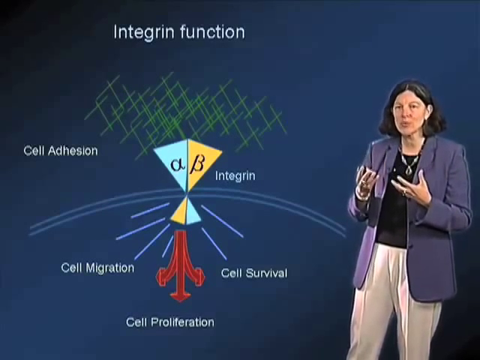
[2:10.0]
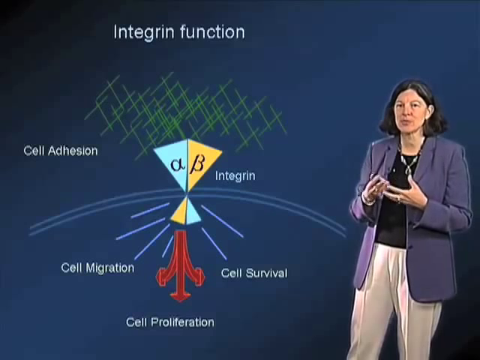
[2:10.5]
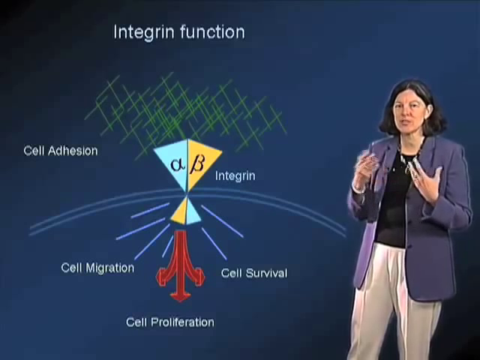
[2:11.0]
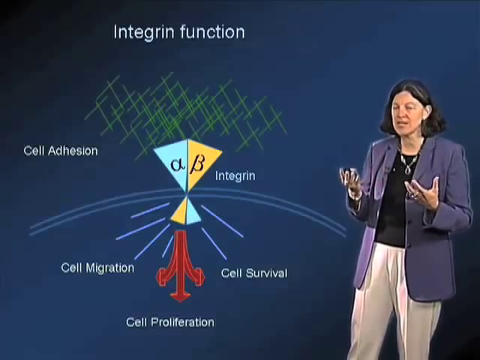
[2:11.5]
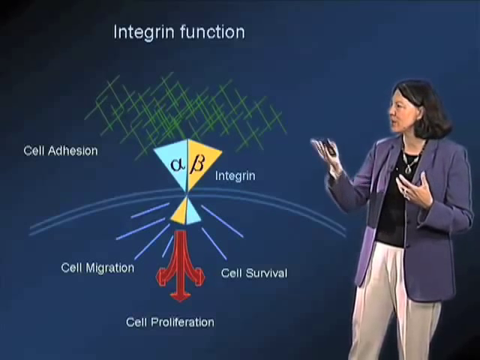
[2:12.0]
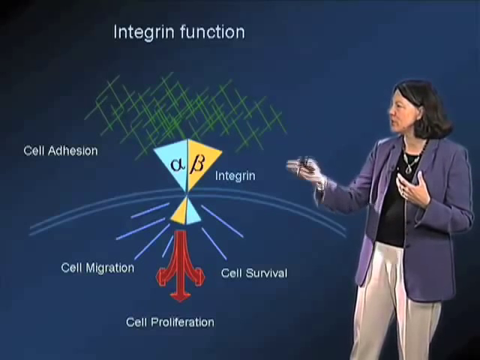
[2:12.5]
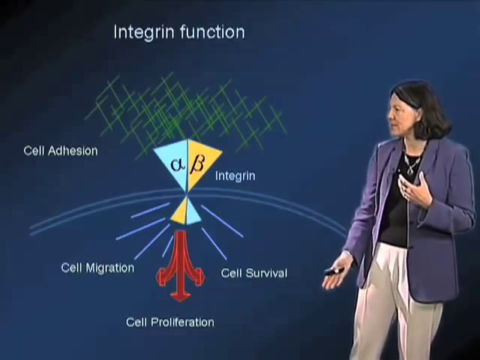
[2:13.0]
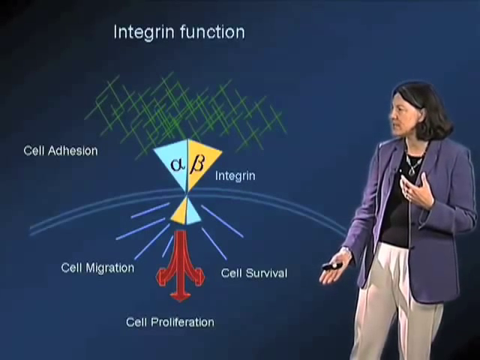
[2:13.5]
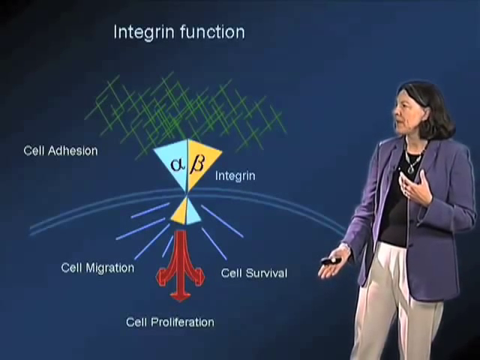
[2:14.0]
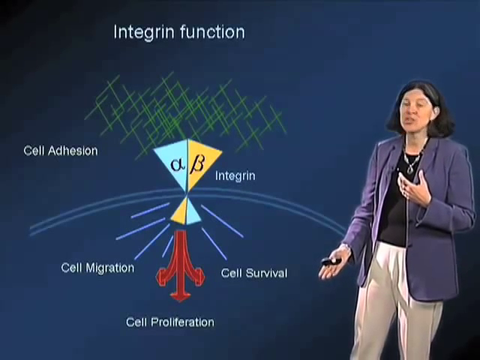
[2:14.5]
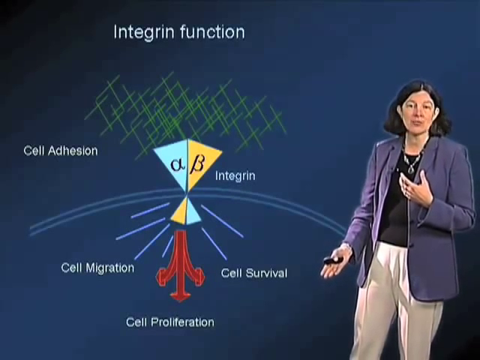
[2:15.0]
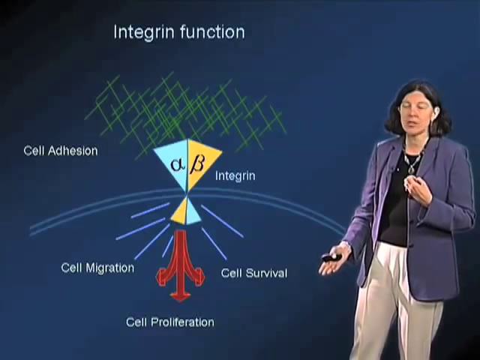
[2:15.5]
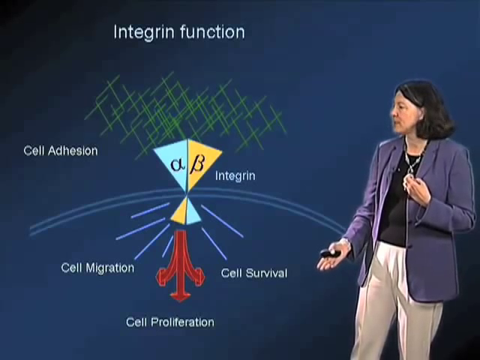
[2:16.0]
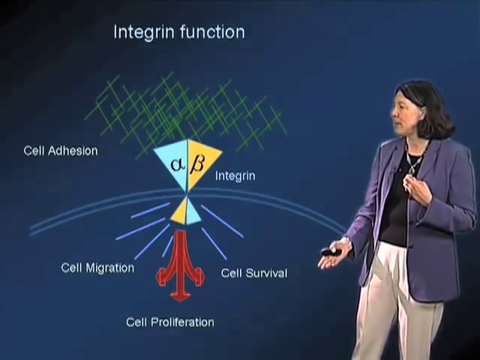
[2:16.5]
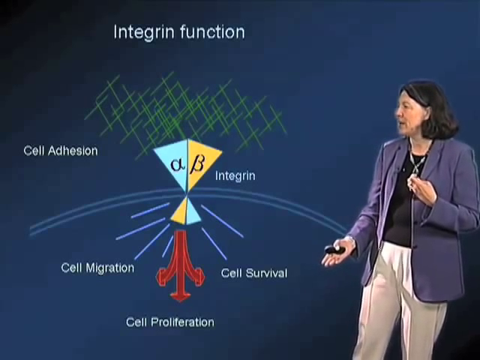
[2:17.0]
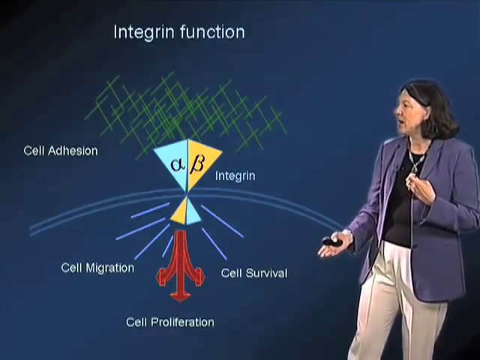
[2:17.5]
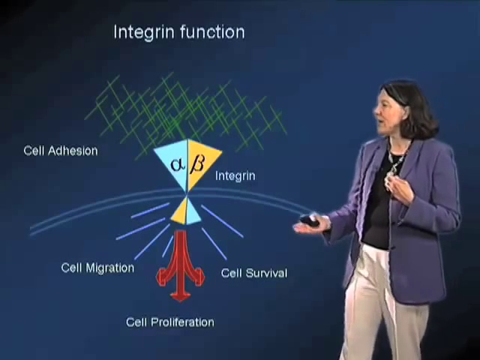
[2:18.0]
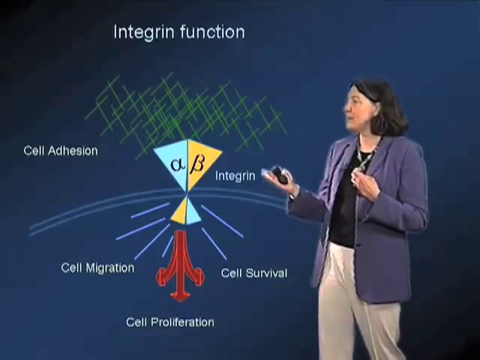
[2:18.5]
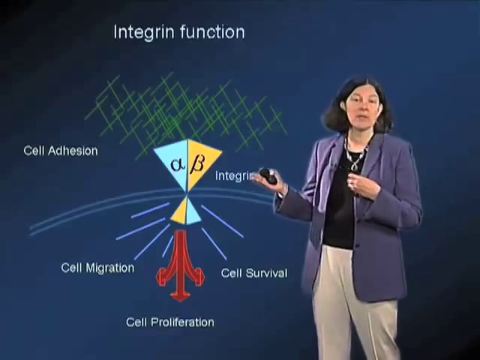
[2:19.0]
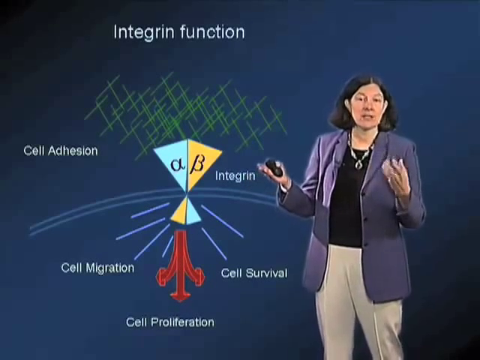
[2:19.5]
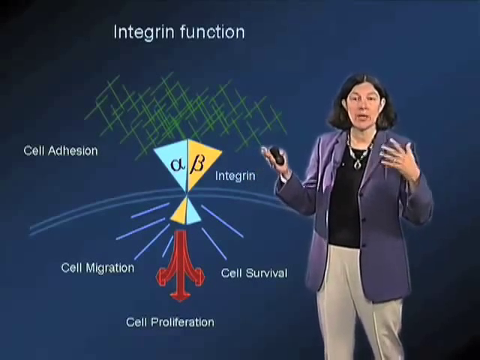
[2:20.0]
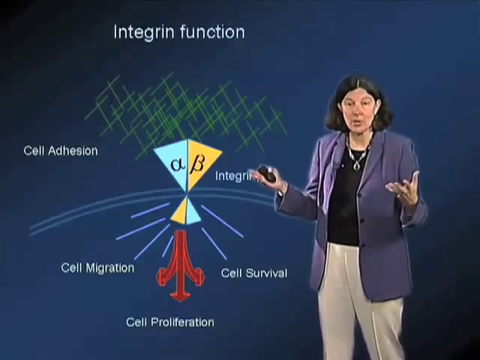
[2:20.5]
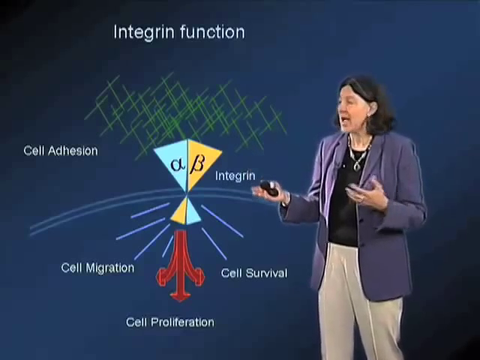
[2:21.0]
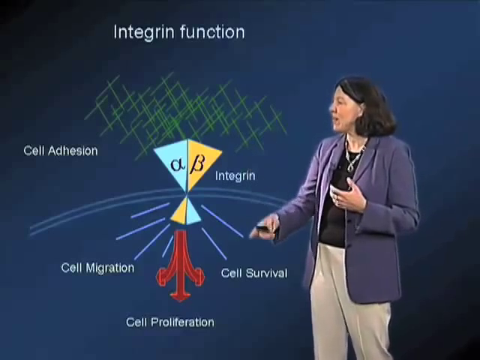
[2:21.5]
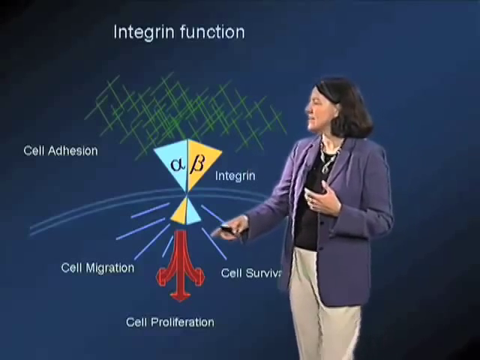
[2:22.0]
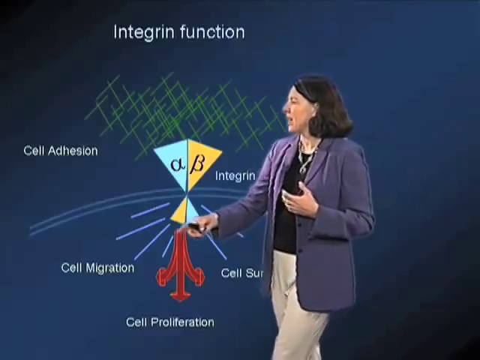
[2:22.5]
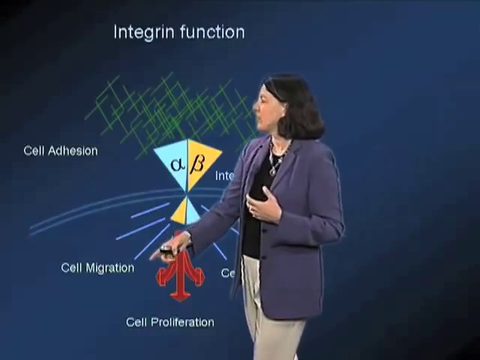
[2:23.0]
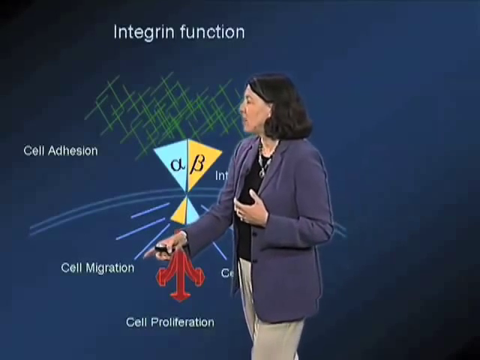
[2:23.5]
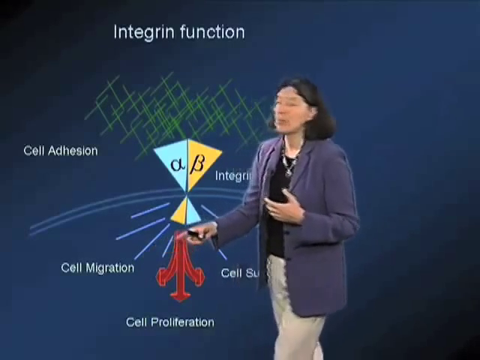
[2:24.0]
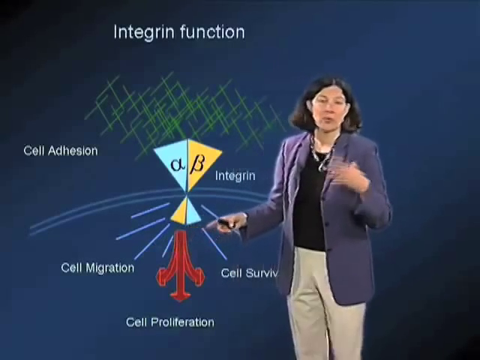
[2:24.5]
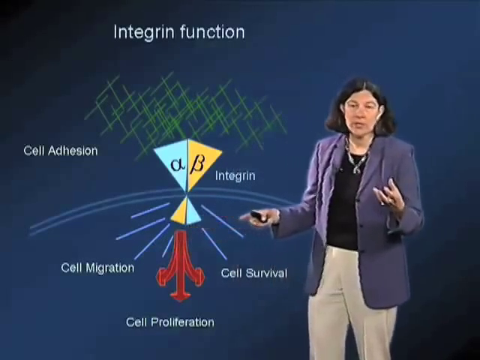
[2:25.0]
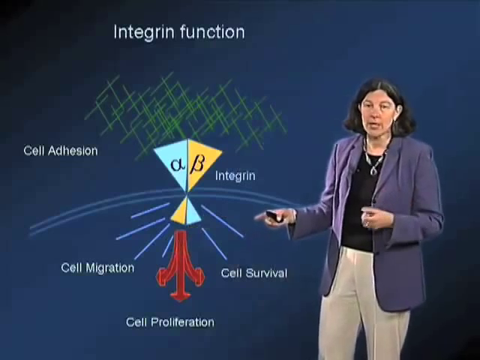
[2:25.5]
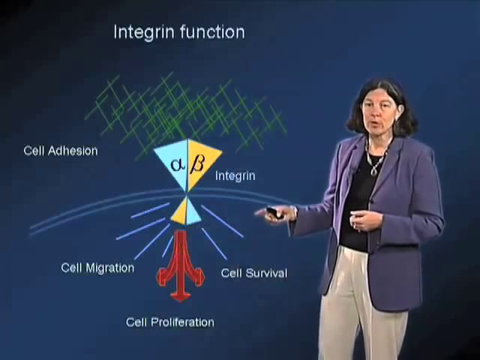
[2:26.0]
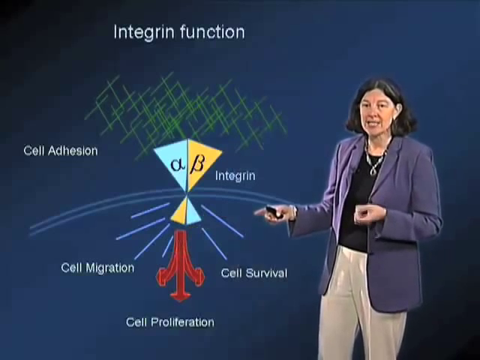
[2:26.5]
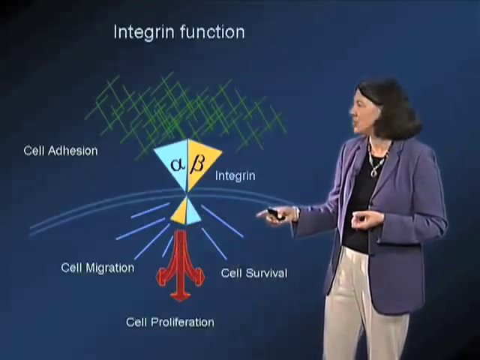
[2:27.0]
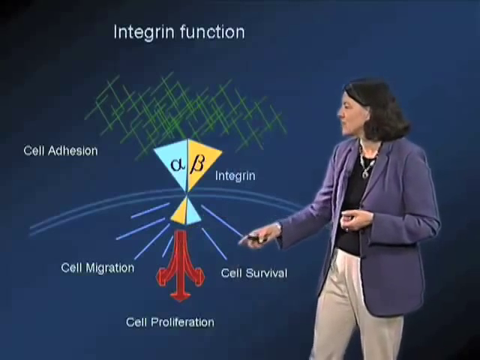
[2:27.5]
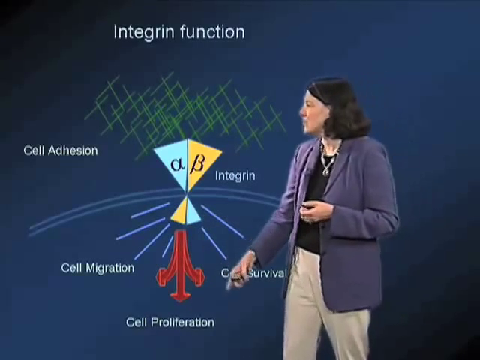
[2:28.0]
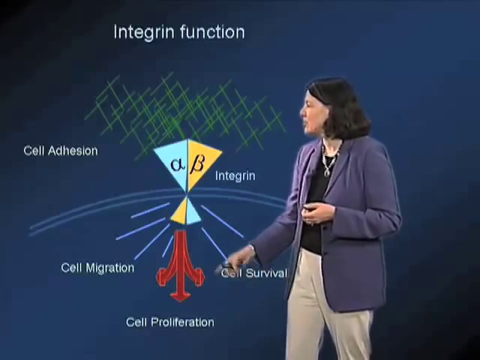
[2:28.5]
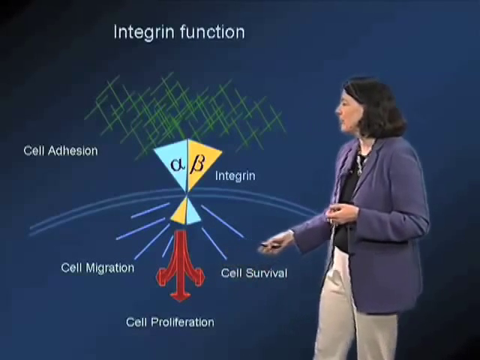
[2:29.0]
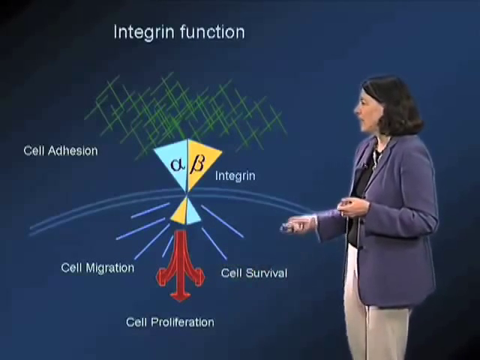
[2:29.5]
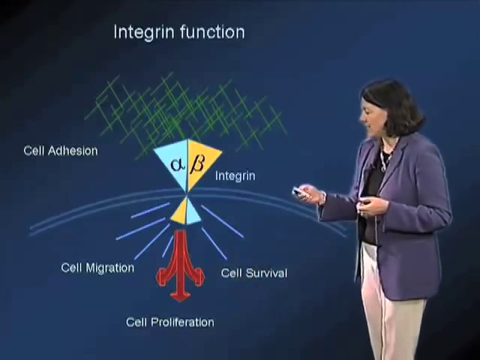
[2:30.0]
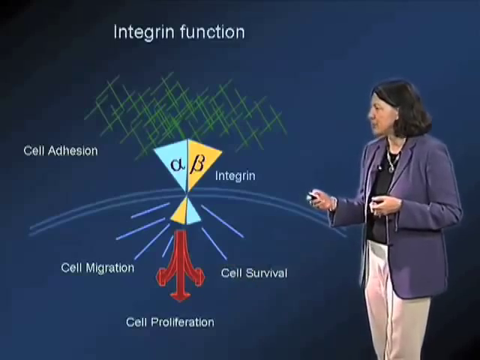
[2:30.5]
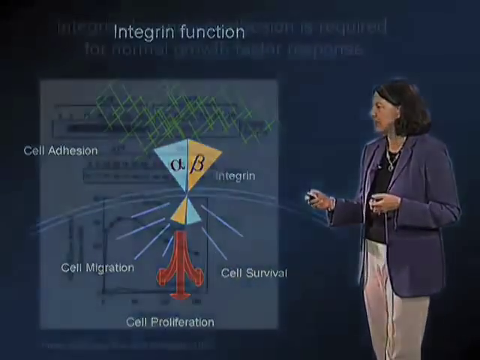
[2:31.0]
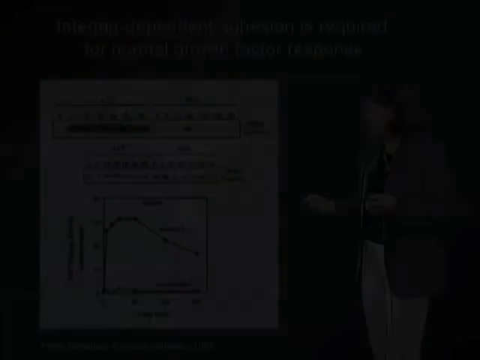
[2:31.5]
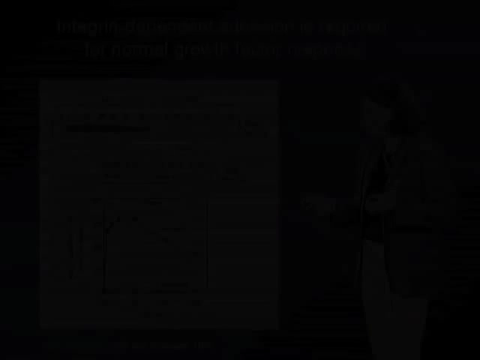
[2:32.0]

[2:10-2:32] A woman looks at the camera. Behind her is a presentation with a blue background and white text titled "Integrin Function", with a diagram. She uses her hands for emphasis, using her right hand to show the size or length of something by moving it from top to bottom while looking at the camera and at the diagram. She walks toward the middle of the screen and points to a specific part, cell migration, while continuing to talk. She holds a clicker in her right hand. She points down to cell proliferation and cell survival. She looks down at the clicker in her right hand and presses it once more, and the screen fades to black as she does so.